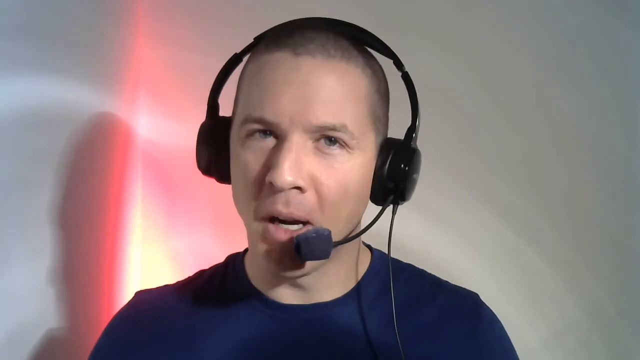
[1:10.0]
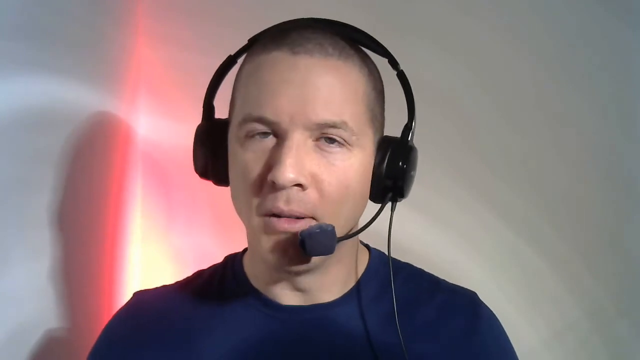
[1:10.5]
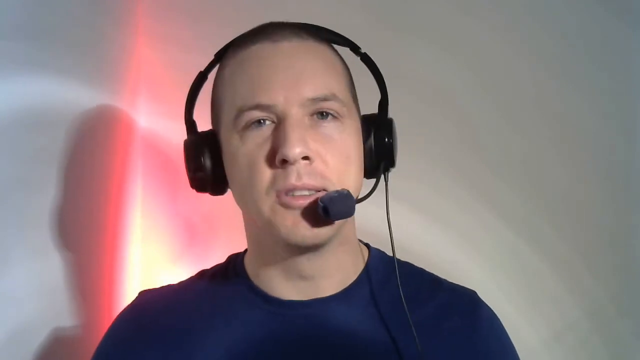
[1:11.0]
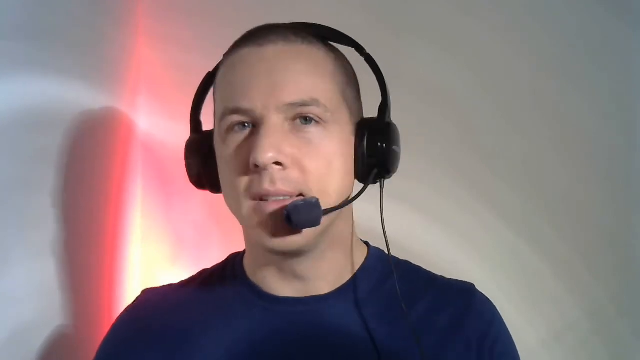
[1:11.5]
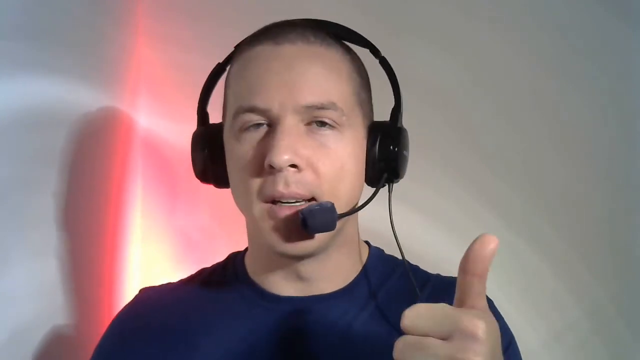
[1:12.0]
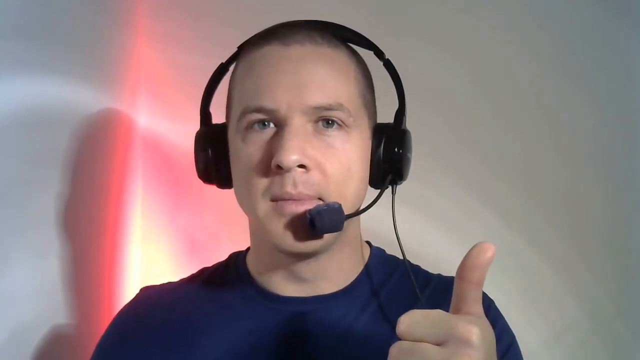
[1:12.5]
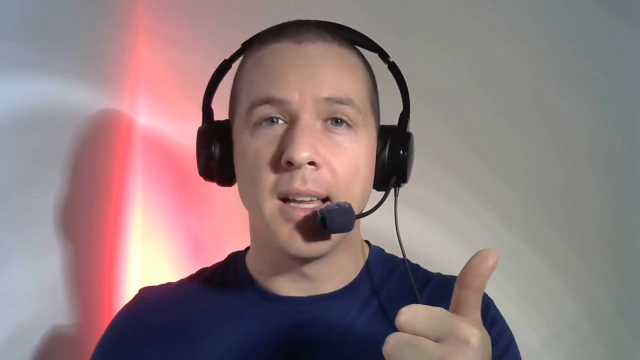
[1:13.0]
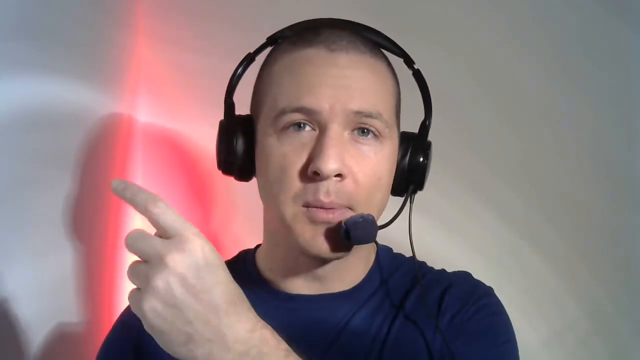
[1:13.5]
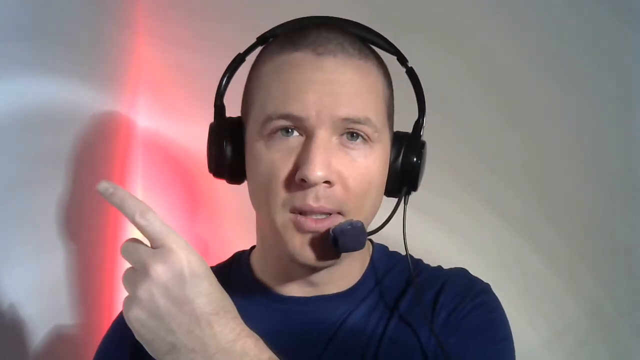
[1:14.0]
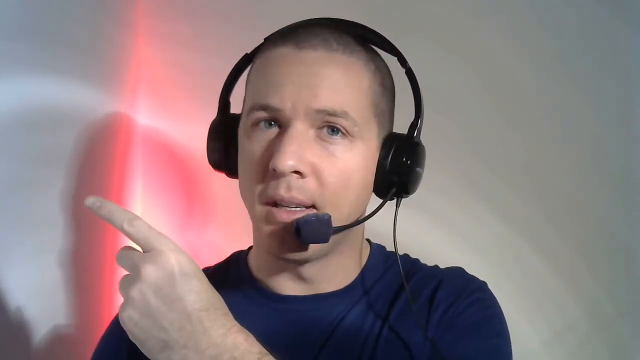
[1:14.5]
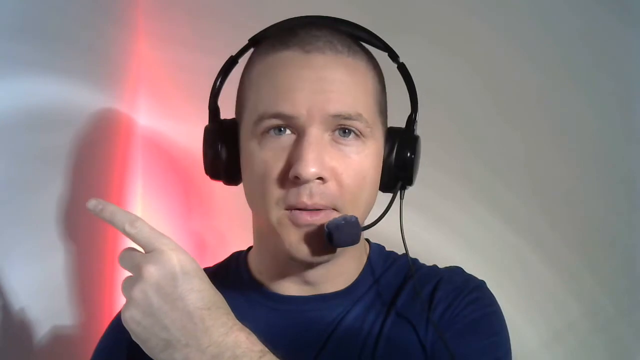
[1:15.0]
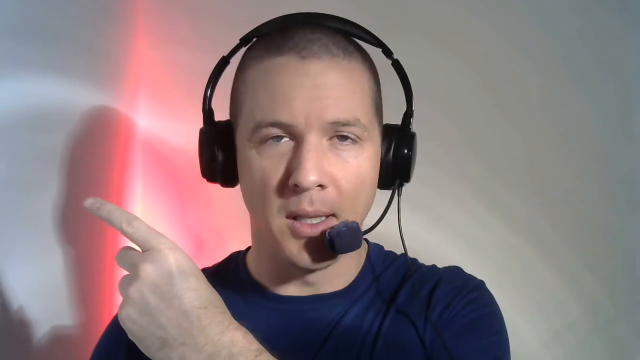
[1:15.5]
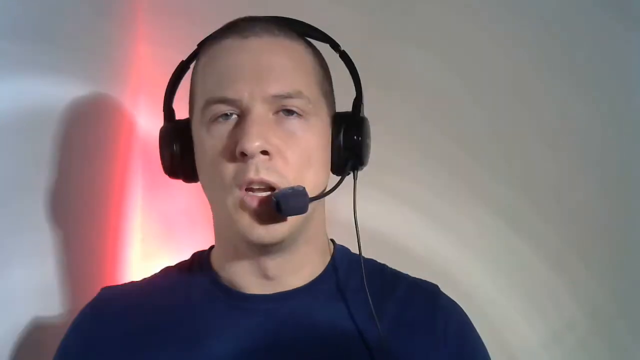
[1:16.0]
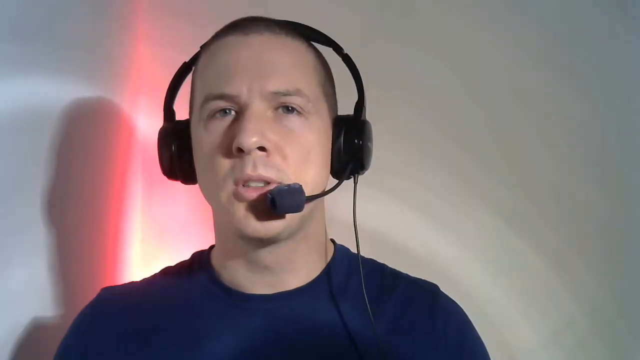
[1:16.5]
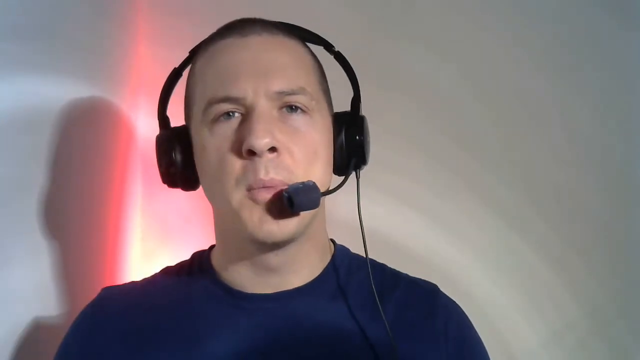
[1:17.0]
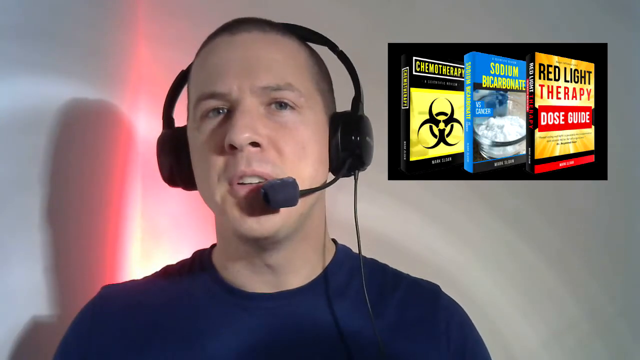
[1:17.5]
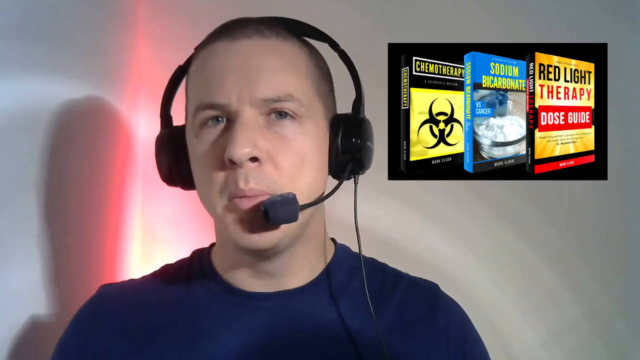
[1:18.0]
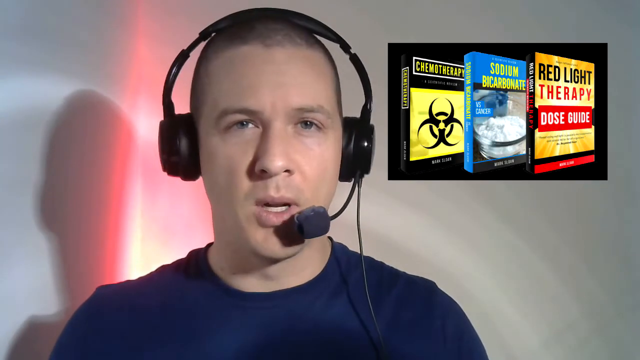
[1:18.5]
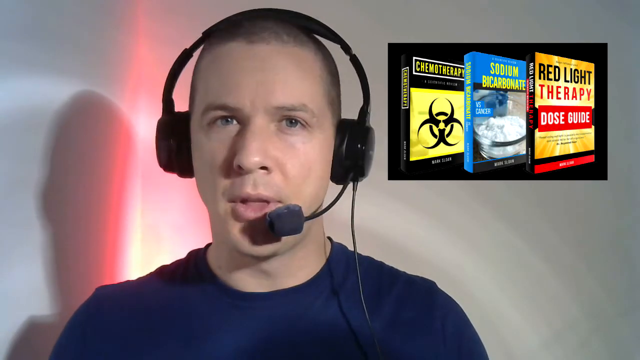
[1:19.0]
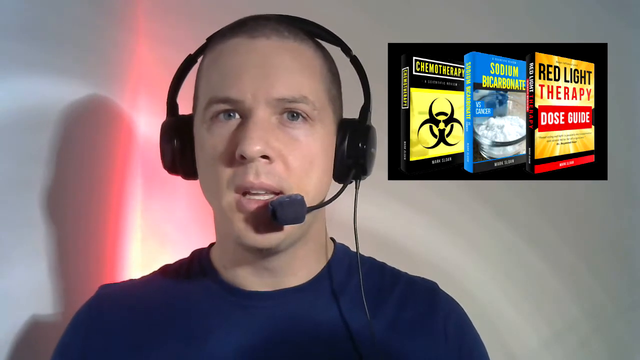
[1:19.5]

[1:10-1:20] In a close-up, a man wearing black headphones with a microphone attached at the bottom speaks directly to the camera. He wears a dark blue shirt, and his hair is very closely trimmed. As he speaks, he gives a thumbs-up with his left hand and then points to the left of the screen. The video seems to jump to a different section, still showing him. As he continues to speak, a graphics box appears in the upper right, a small black box showing what looks like three DVDs or three book covers: the first says "Red Light Therapy Dose Guide," the one in the center says "Sodium Bicarbonate," and the last says "Chemotherapy." The background behind him is otherwise blurred, with a small section of red.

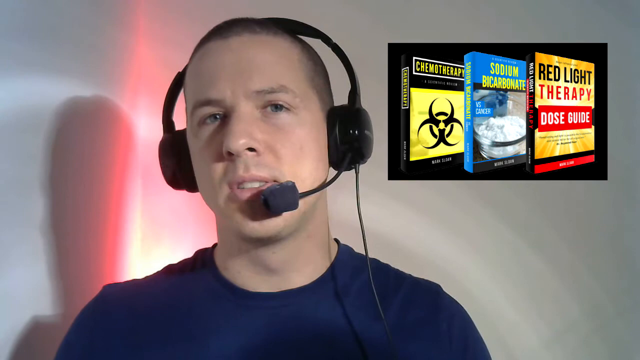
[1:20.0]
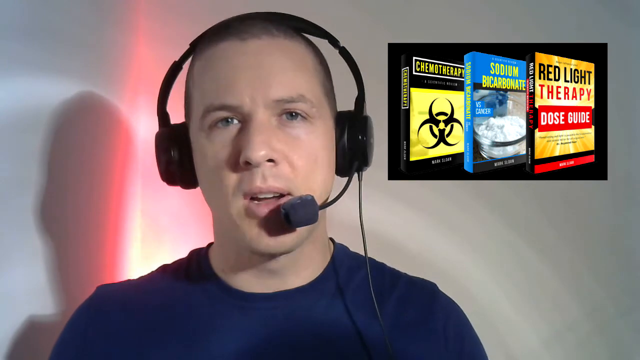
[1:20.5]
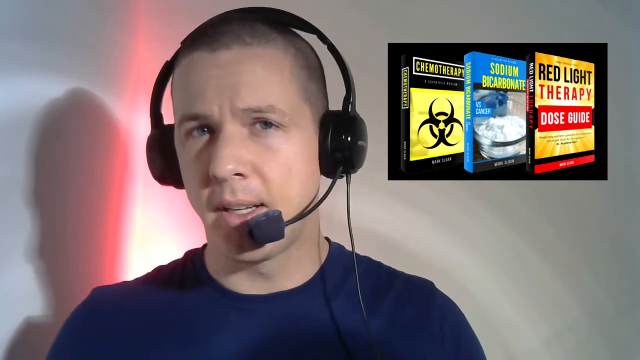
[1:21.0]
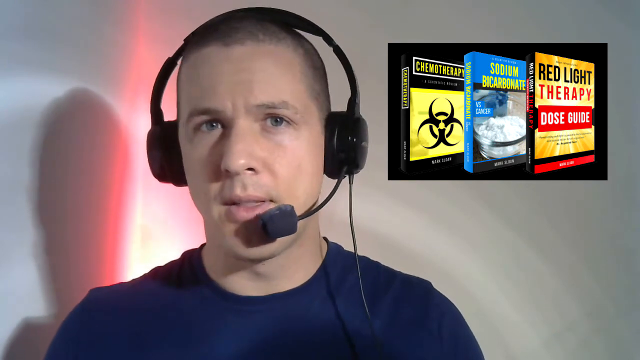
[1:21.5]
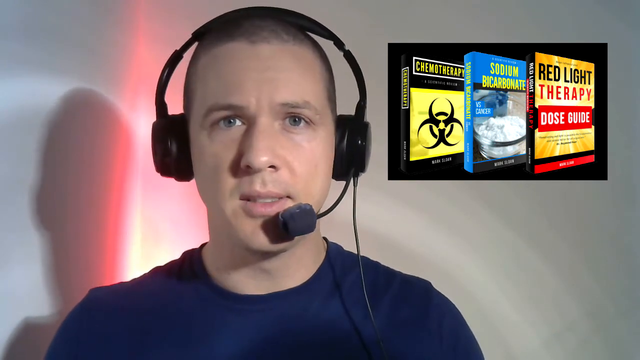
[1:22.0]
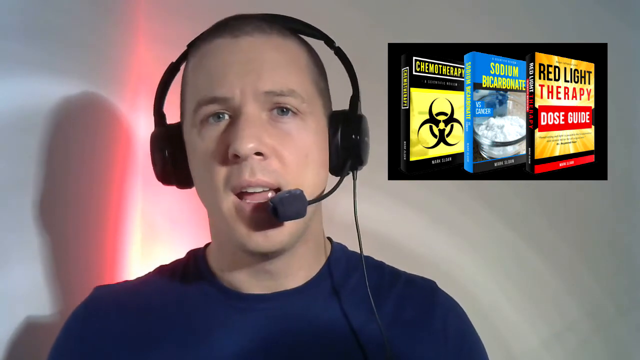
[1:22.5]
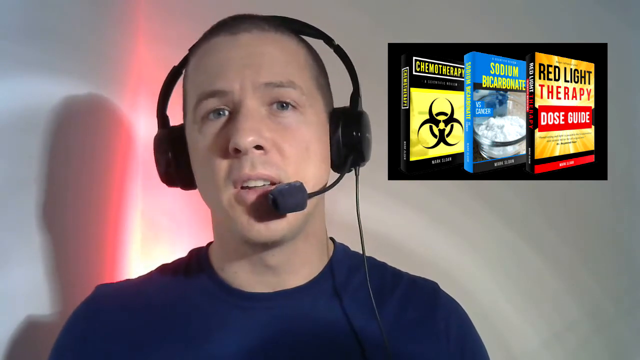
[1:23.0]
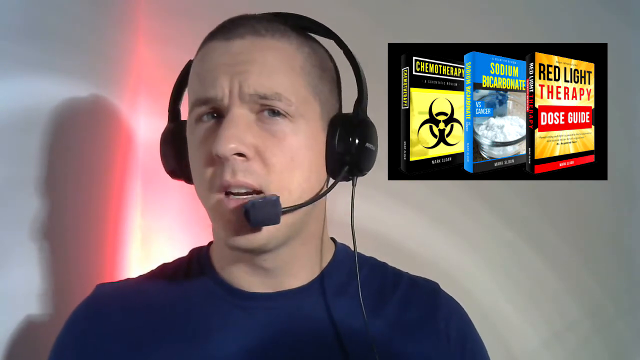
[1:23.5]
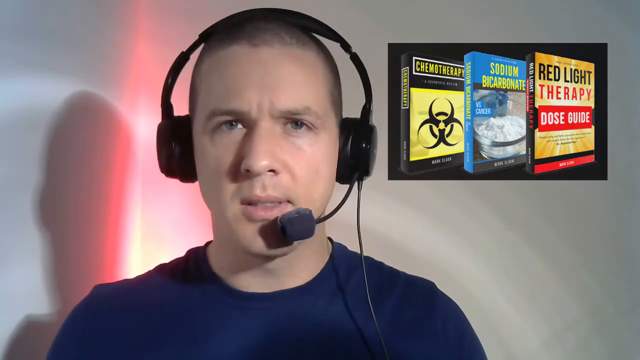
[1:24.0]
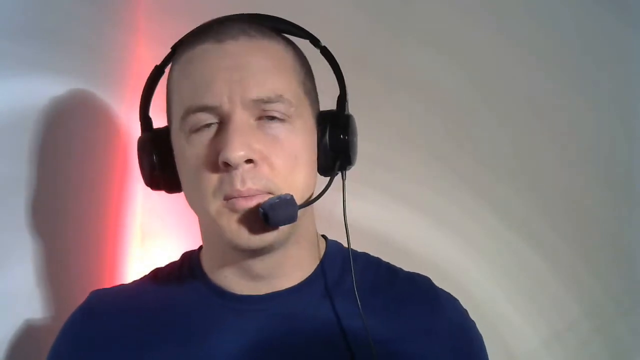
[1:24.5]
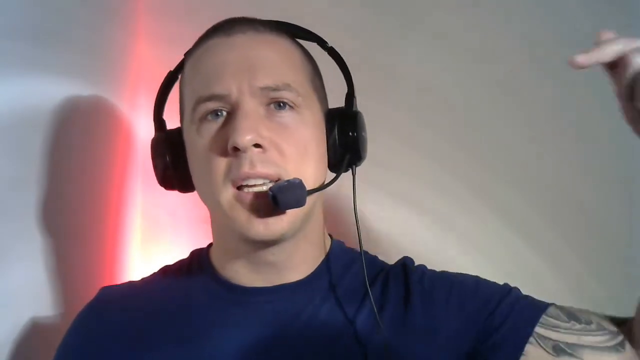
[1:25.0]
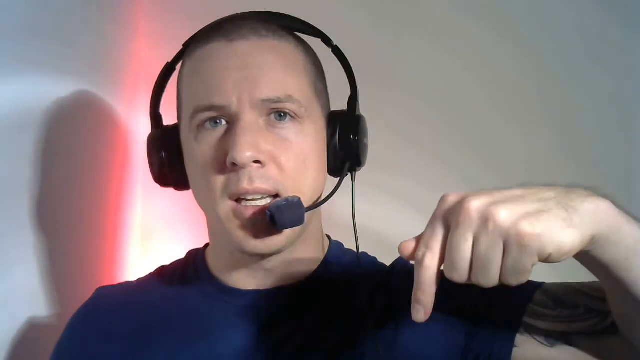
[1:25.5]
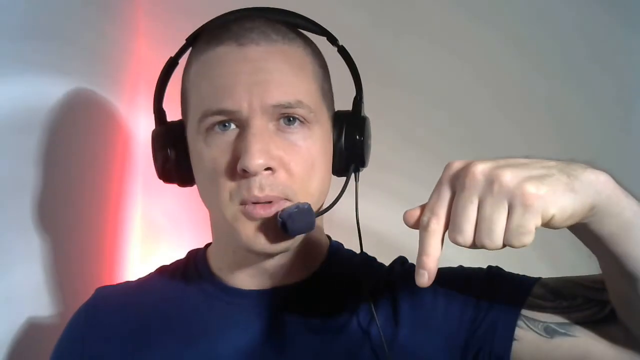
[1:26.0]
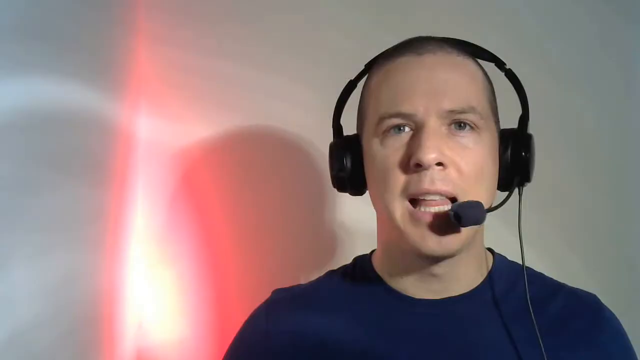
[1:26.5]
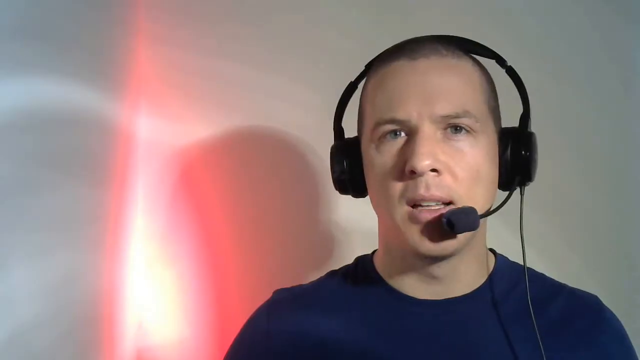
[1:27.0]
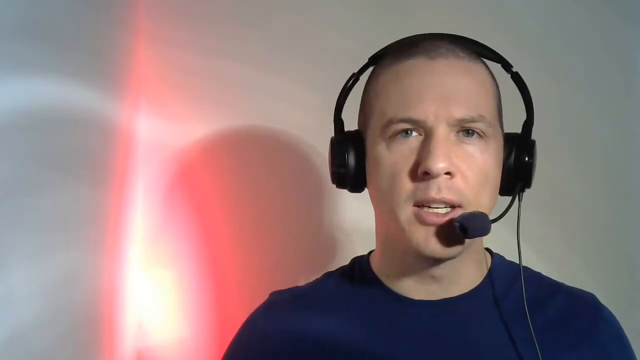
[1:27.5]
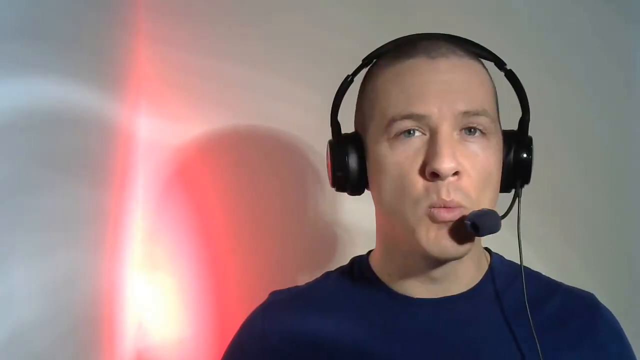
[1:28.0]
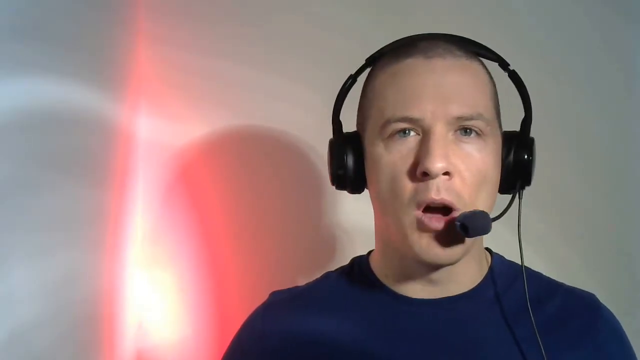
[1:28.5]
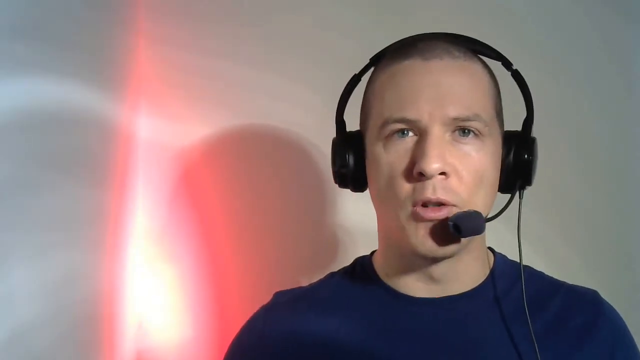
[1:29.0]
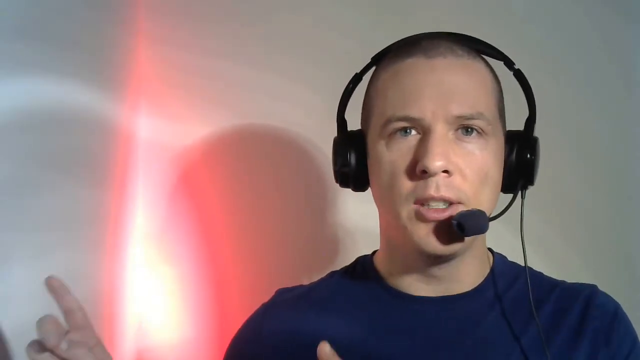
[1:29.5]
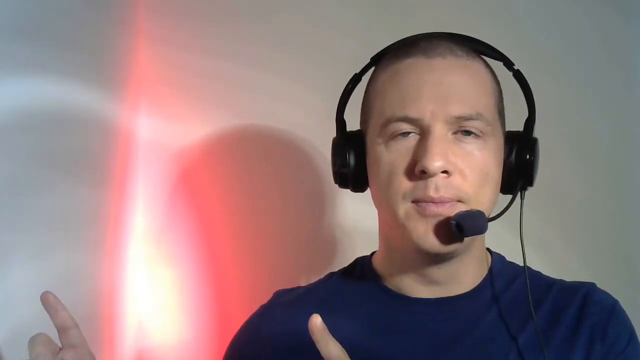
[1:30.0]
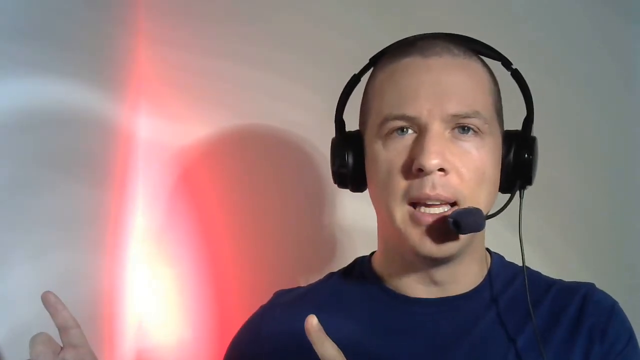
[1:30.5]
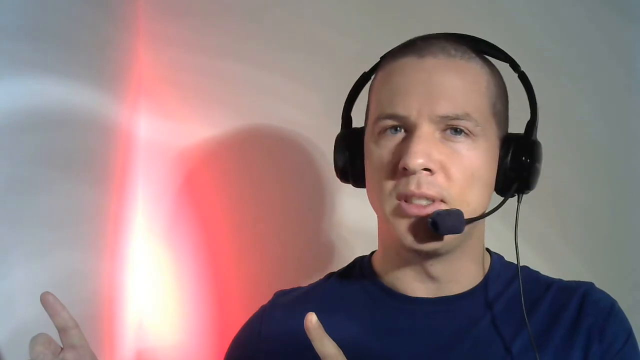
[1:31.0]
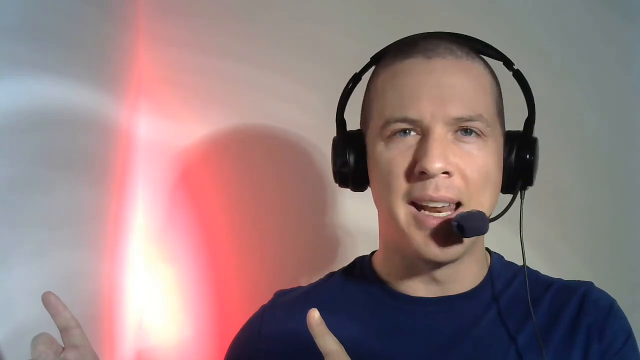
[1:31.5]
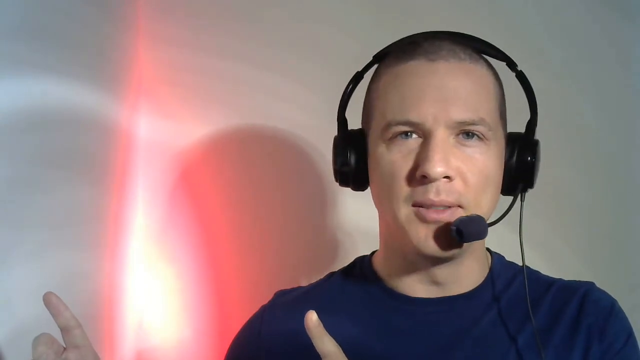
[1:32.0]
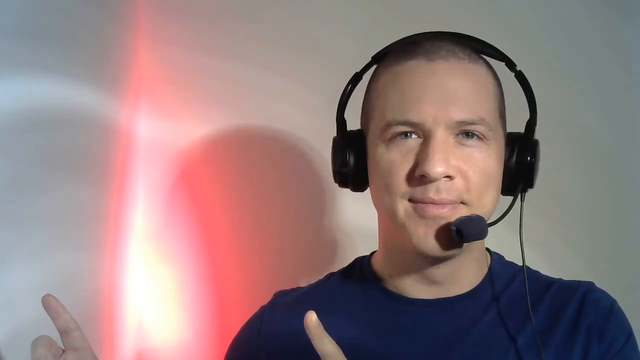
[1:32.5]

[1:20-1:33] A man, filmed from the shoulders up, speaks to the camera wearing a microphone headset. On the right side of the screen is a small graphics box with a black background containing a row of three DVD covers or book covers. The first one, in the front, reads "Red Light Therapy Dose Guide," the one in the center reads "Sodium Bicarbonate," and the one in the back says "Chemotherapy." The box fades, and the man reaches up with his left hand and points down at the bottom of the screen. The scene shifts; it is still him talking to the camera, but the camera angle looks as if it has changed slightly. He gestures toward something on the left side of the screen and smiles.